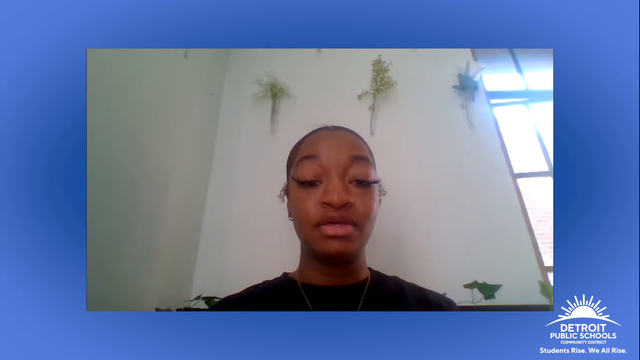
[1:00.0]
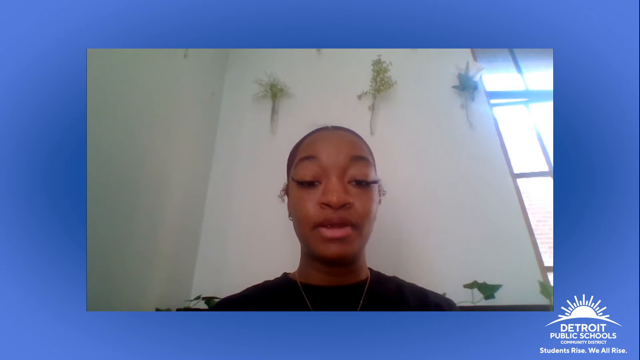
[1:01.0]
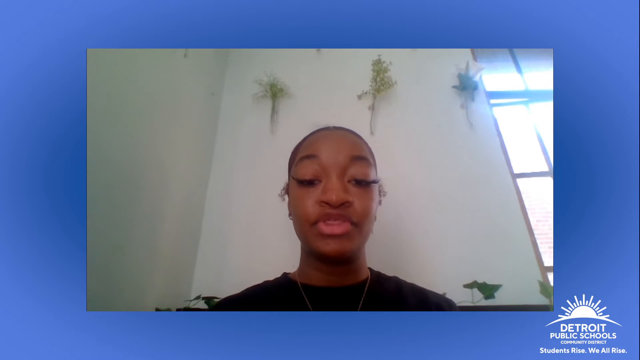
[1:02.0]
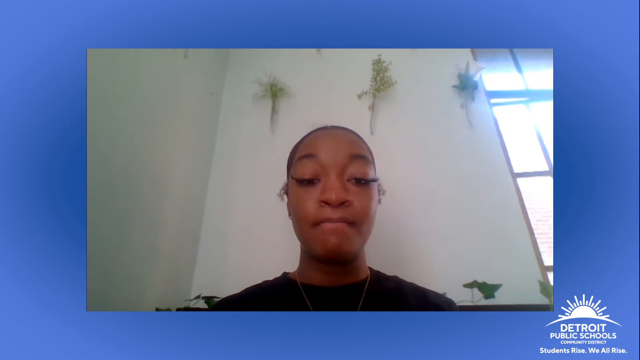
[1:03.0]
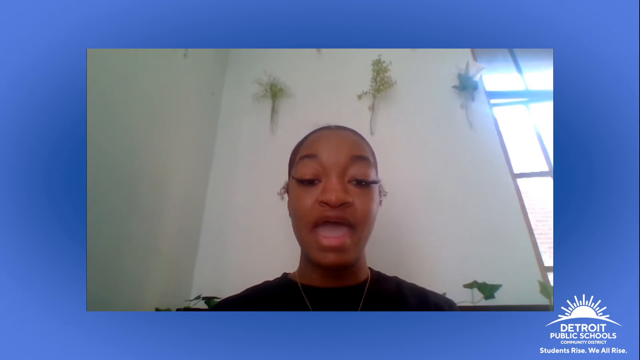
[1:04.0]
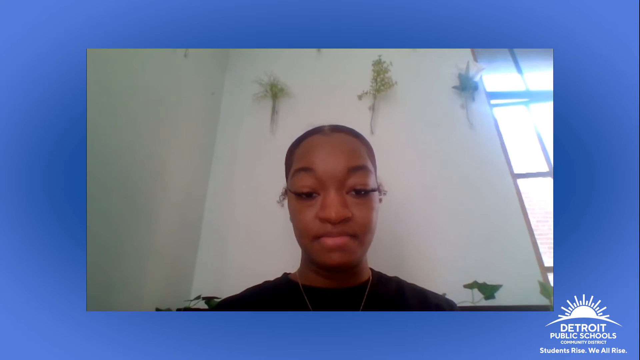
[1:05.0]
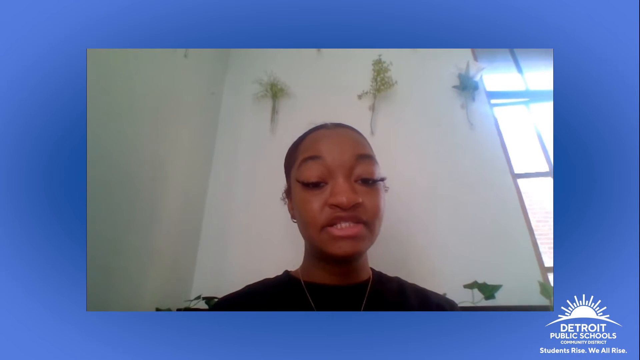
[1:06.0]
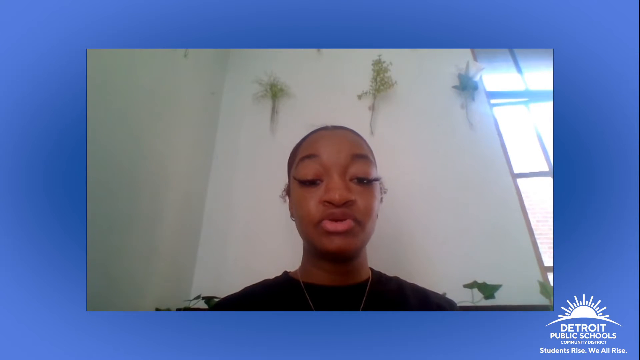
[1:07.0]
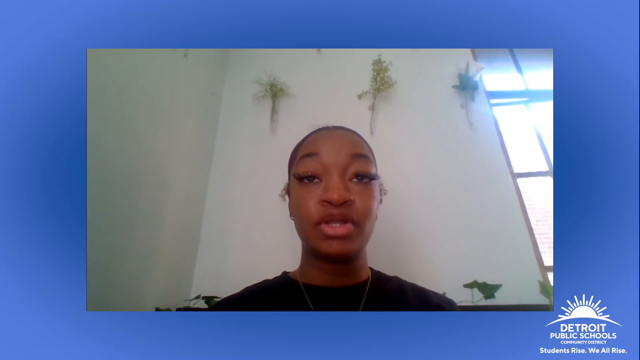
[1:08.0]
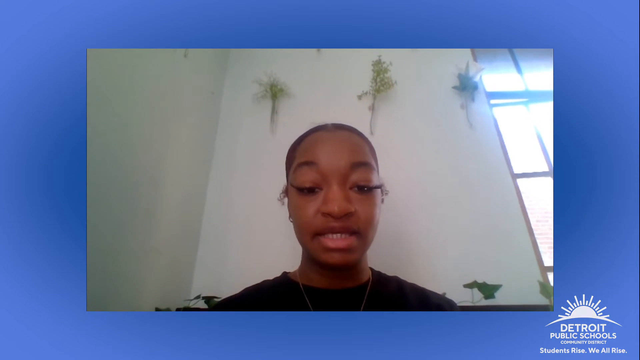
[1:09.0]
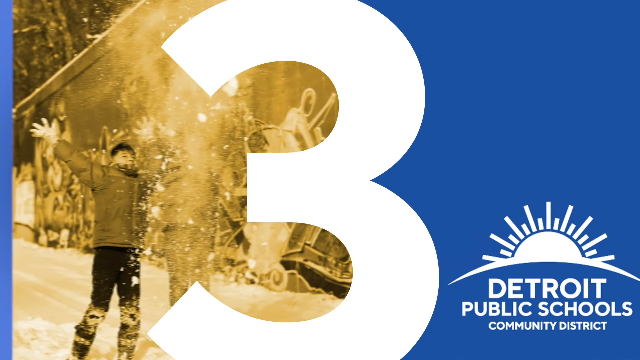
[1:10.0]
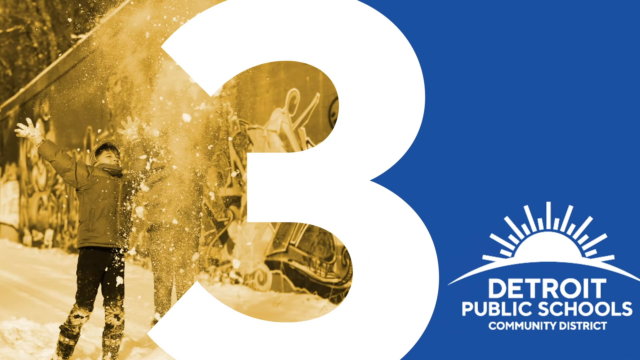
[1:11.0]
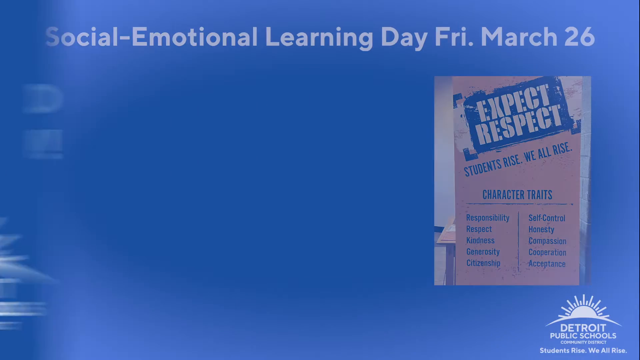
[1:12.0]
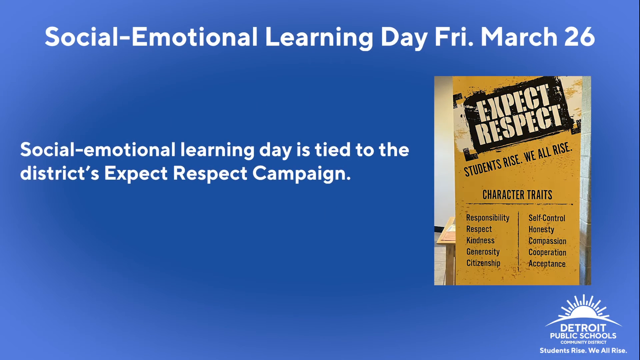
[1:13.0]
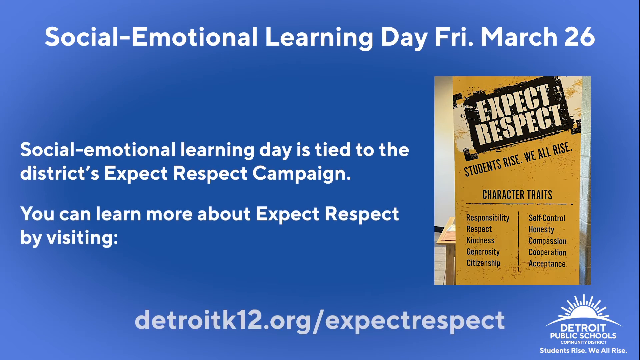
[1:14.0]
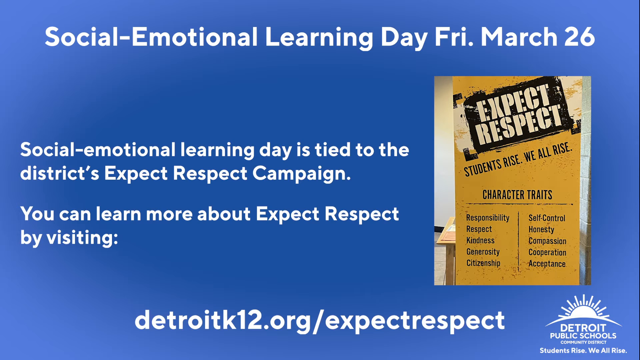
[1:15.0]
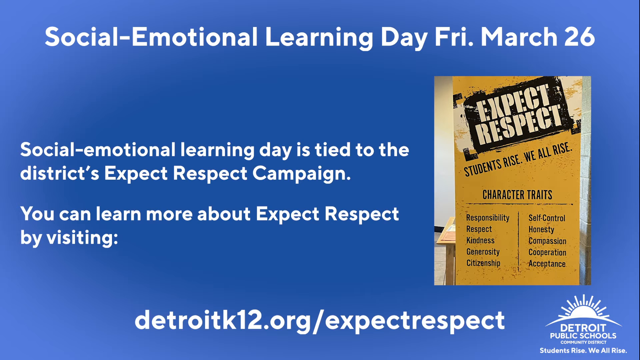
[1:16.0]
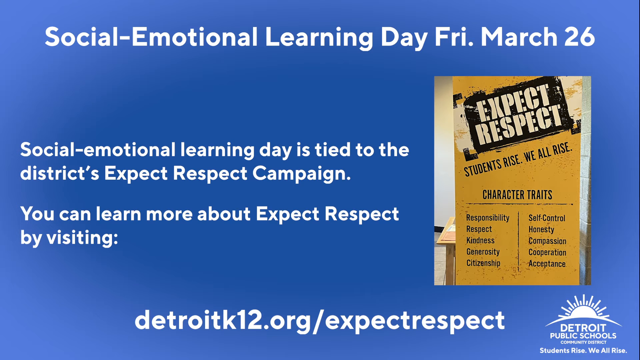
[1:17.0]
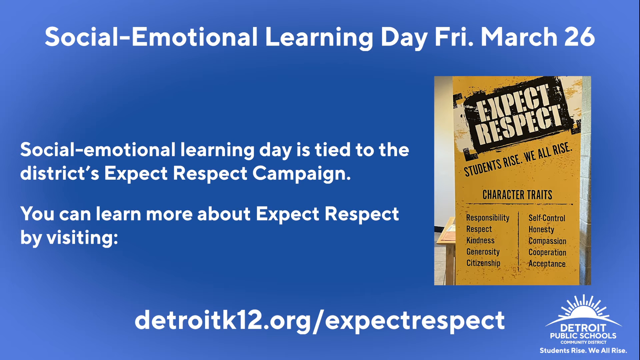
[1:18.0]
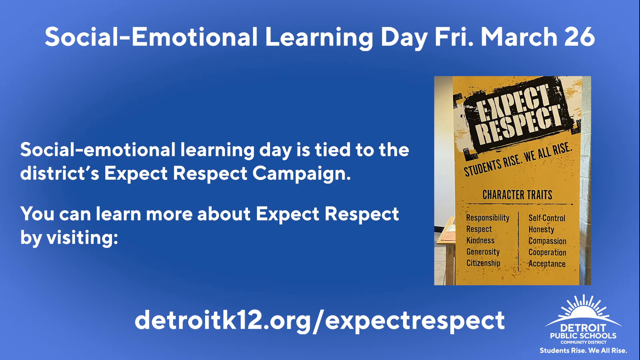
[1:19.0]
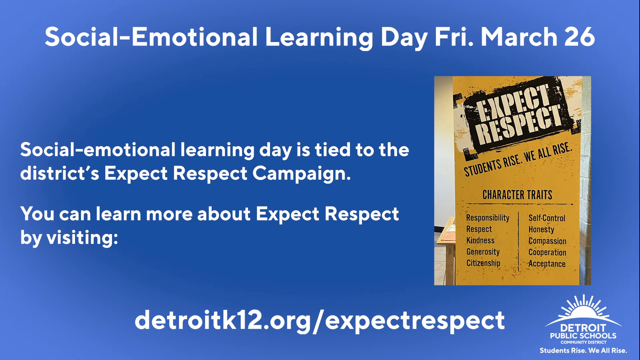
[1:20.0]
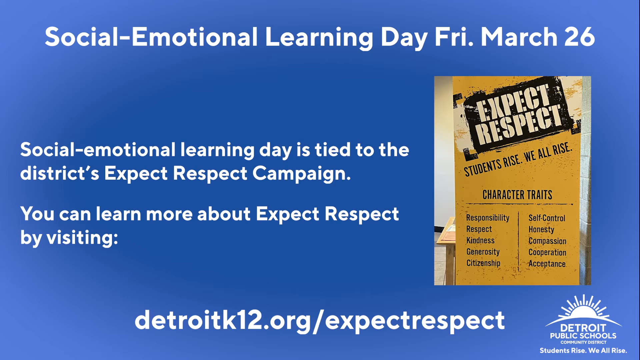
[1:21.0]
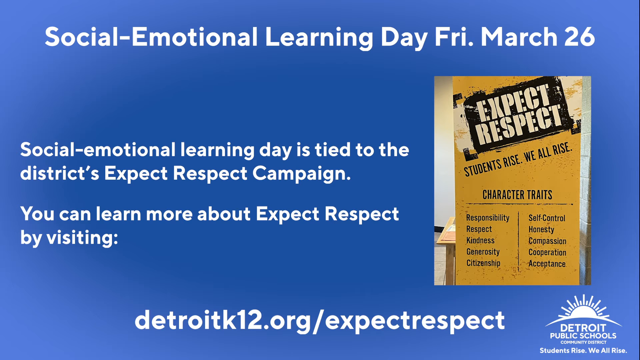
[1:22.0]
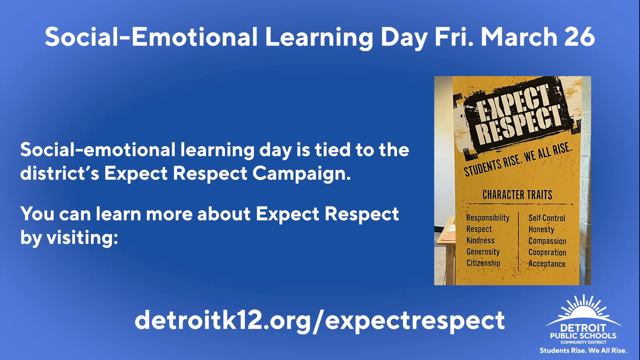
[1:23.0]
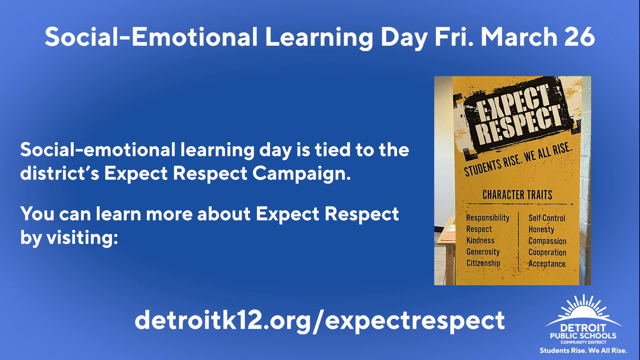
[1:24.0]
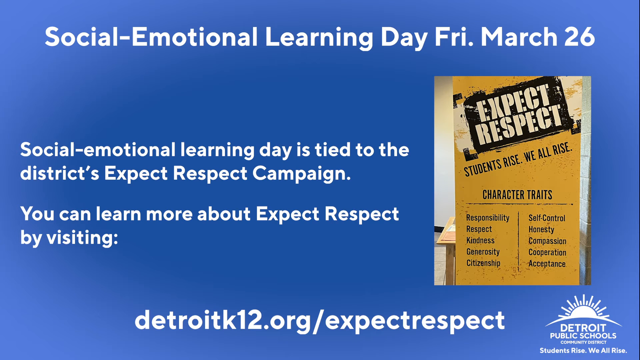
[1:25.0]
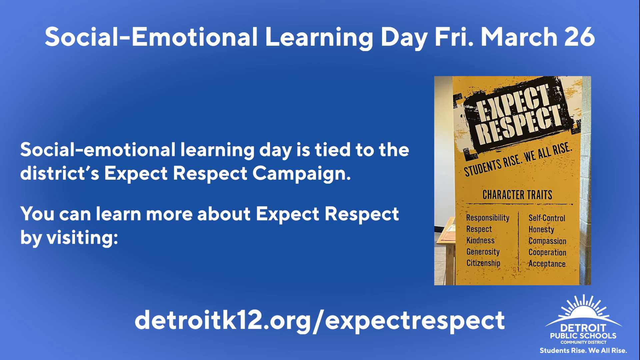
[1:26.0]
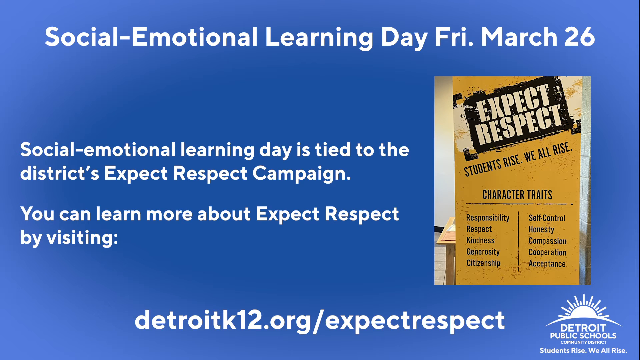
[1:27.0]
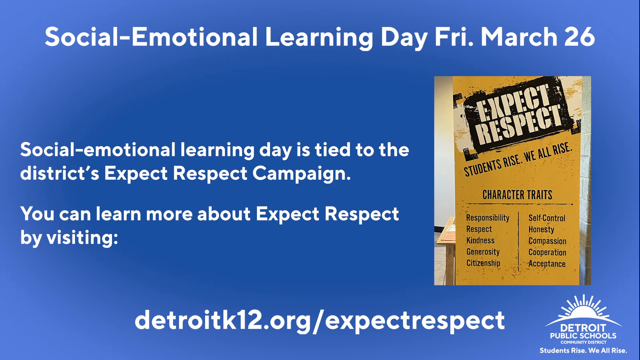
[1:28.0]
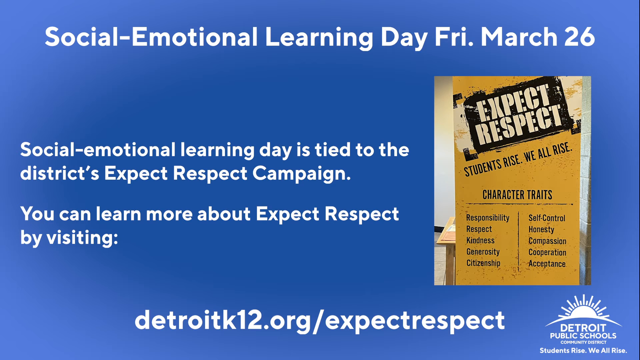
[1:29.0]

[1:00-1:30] The girl continues talking in the white bedroom or room of her house, with different plants that appear to be hanging on the wall. The video cuts to a screen with a big white 3 in the center. To its left is a vintage filtered photo that appears to show a young boy throwing snow up into the air. The right side is blue with the Detroit Public Schools Community District logo at the bottom right. Next comes a blue page that says "Social Emotional Learning Day Friday March 26th." To the right is a picture of a yellow poster that says "Expect Respect Students Rise We All Rise" and then lists a few character traits. To the left is written "Social Emotional Learning Day is tied to the district's Expect Respect campaign. You can learn more about Expect Respect by visiting," and at the bottom it says "detroitk12.org/ expectrespect."